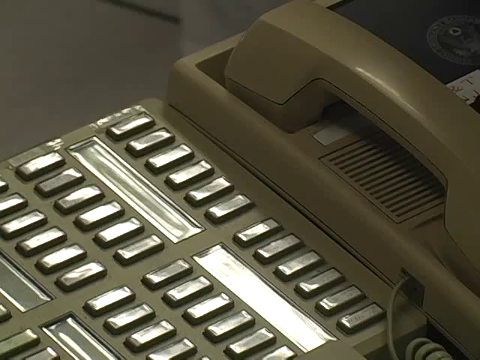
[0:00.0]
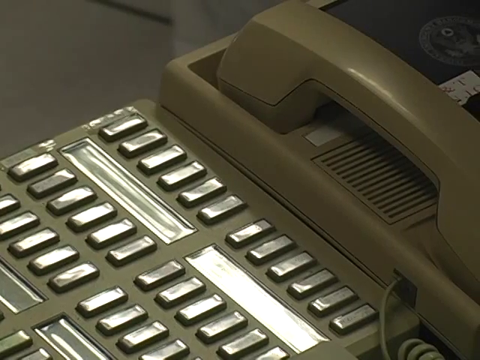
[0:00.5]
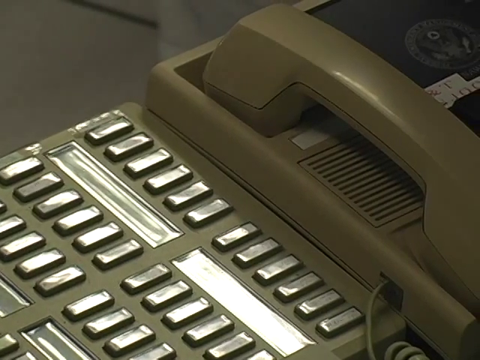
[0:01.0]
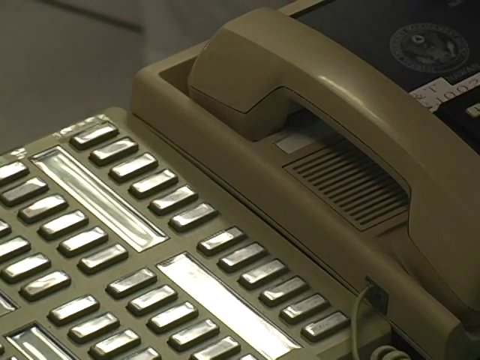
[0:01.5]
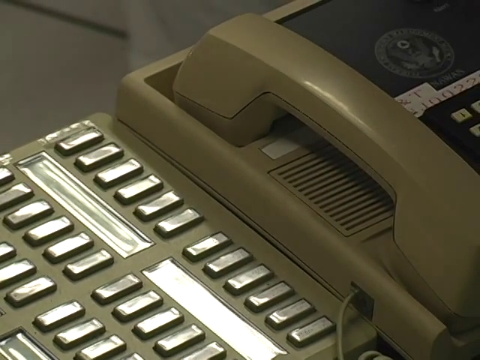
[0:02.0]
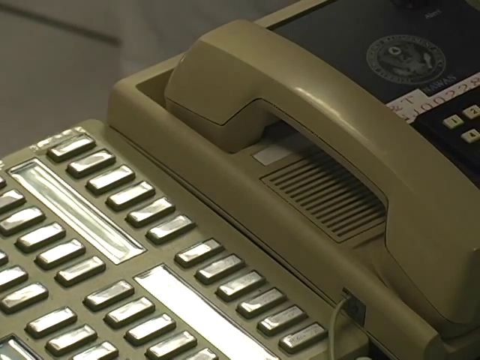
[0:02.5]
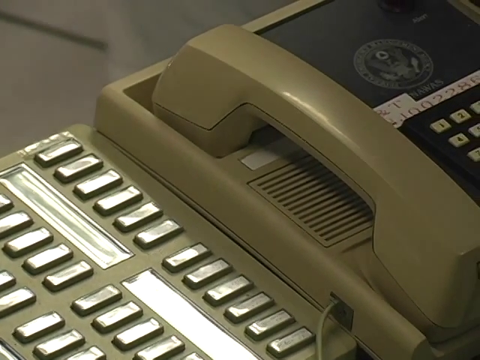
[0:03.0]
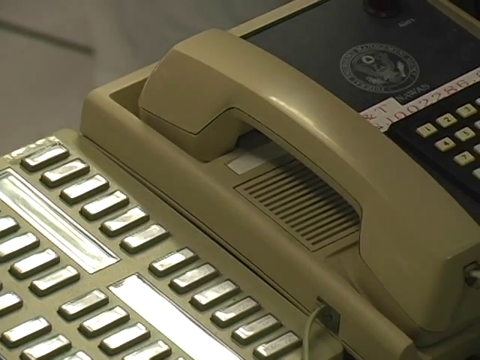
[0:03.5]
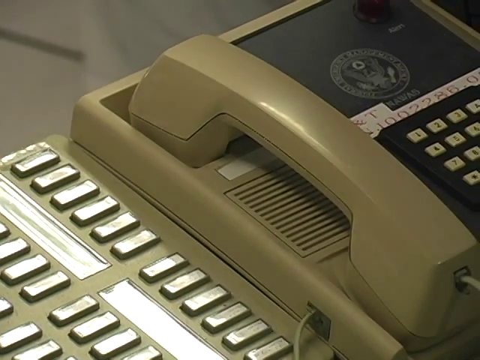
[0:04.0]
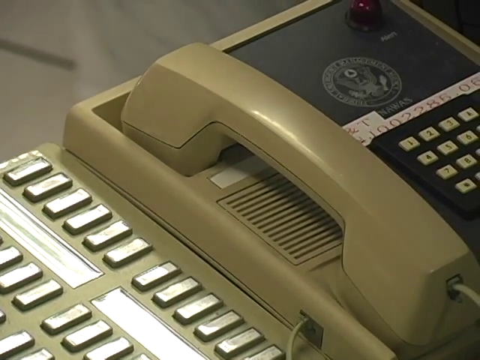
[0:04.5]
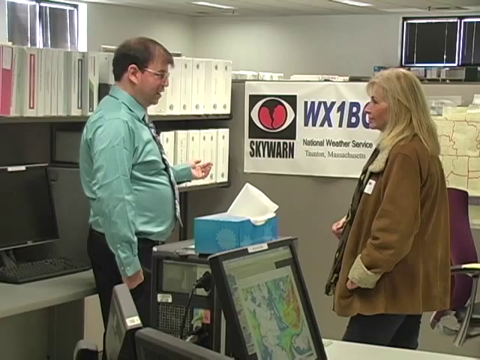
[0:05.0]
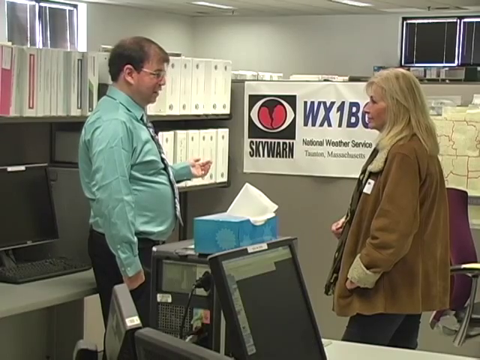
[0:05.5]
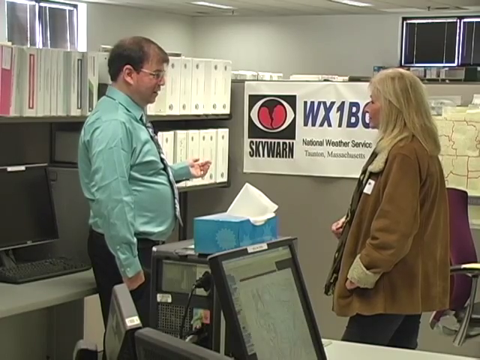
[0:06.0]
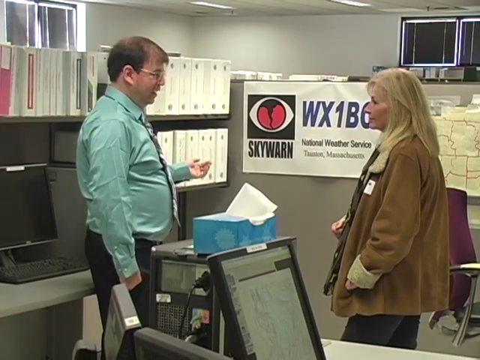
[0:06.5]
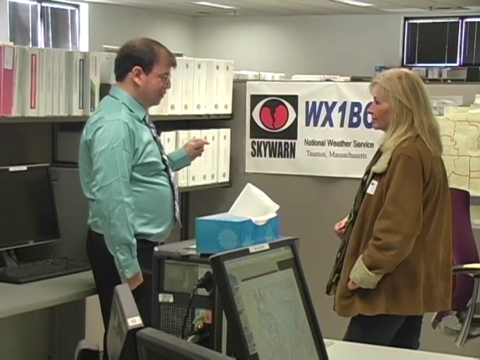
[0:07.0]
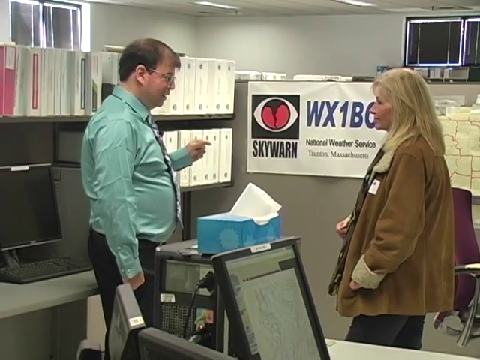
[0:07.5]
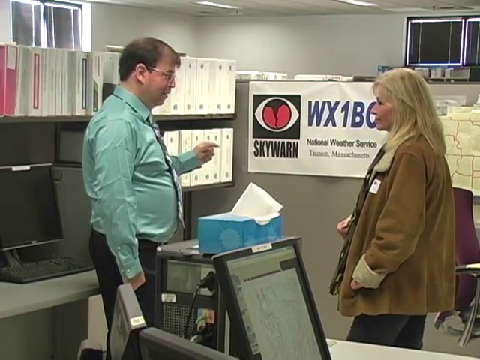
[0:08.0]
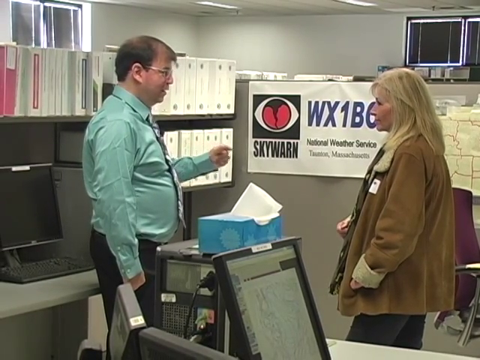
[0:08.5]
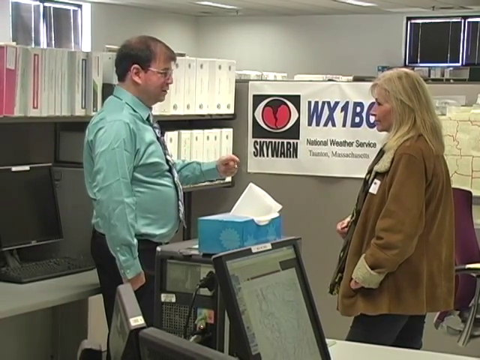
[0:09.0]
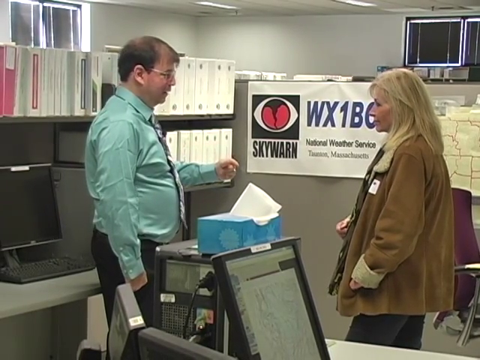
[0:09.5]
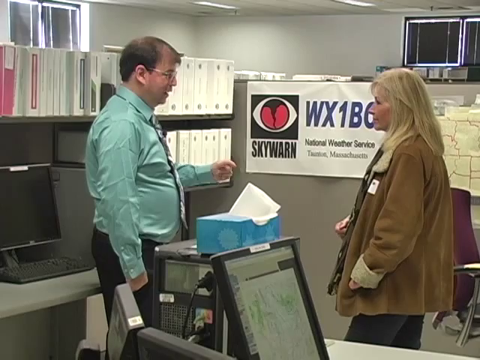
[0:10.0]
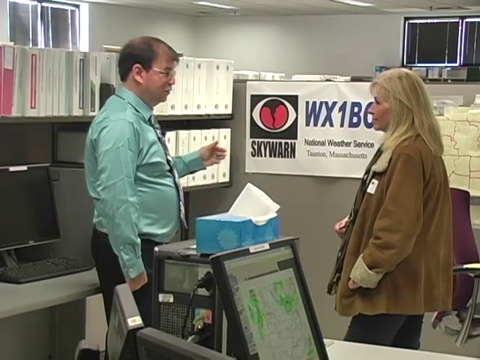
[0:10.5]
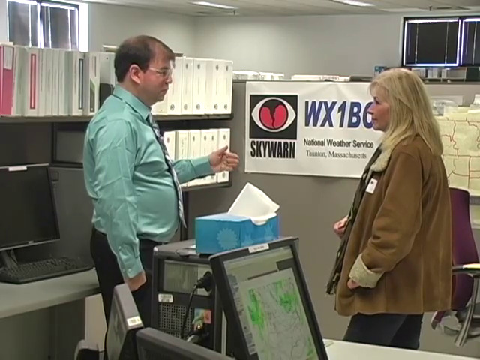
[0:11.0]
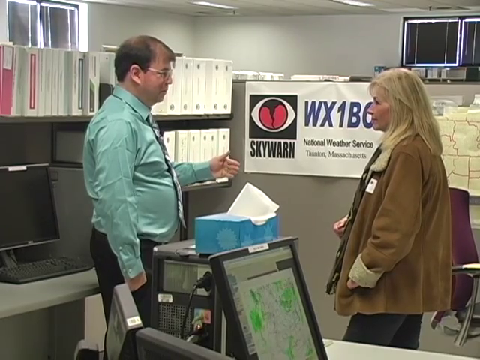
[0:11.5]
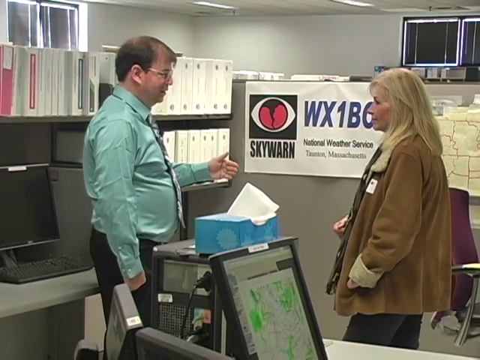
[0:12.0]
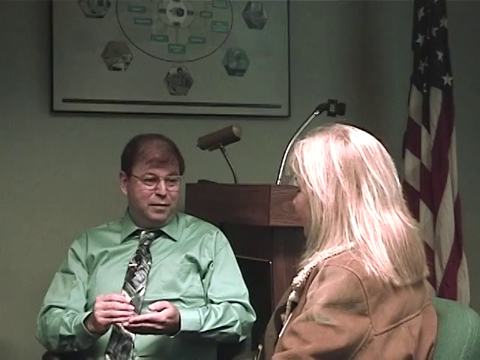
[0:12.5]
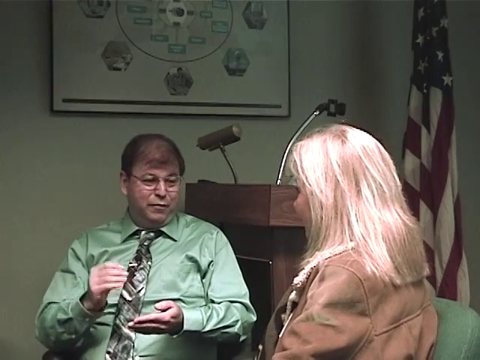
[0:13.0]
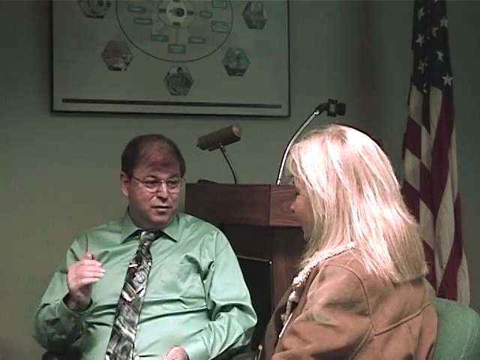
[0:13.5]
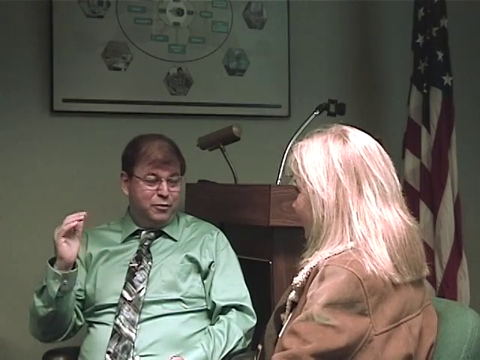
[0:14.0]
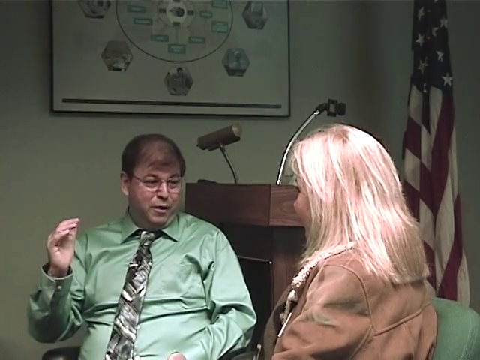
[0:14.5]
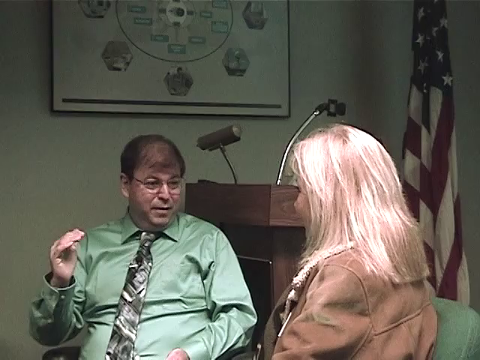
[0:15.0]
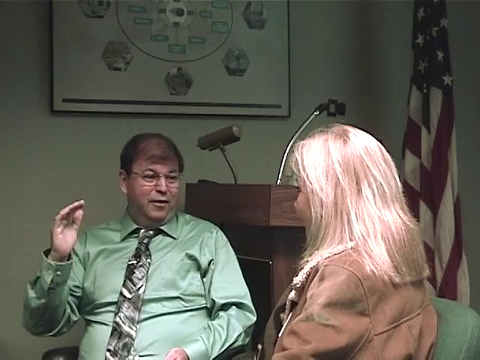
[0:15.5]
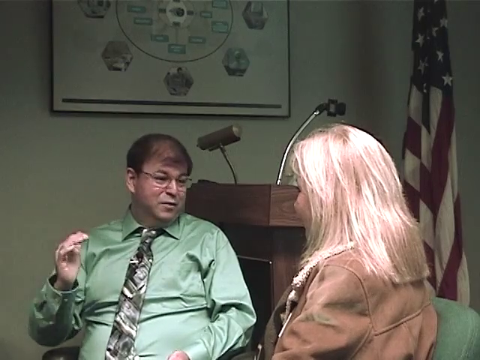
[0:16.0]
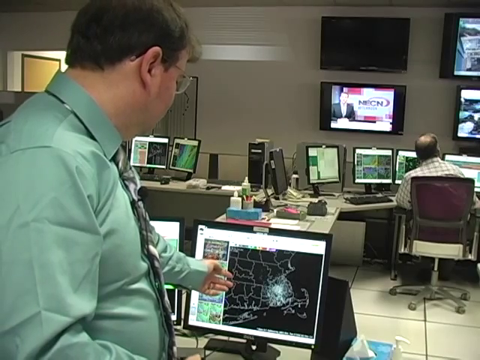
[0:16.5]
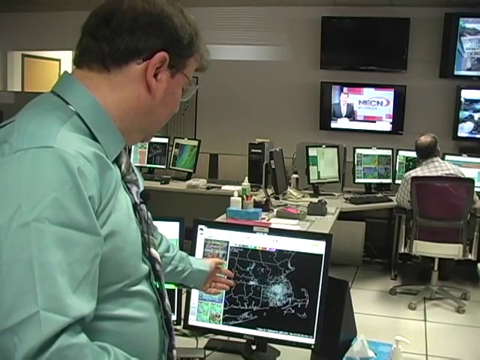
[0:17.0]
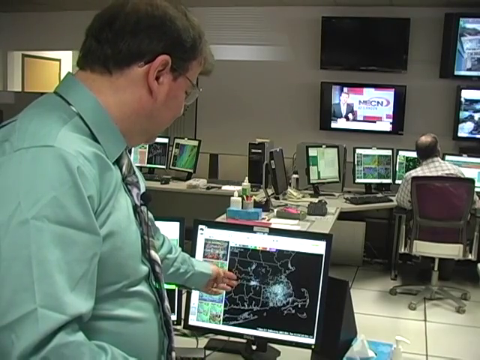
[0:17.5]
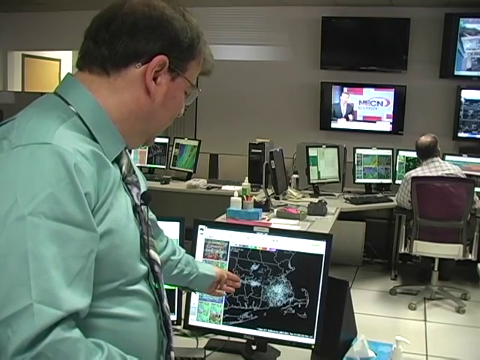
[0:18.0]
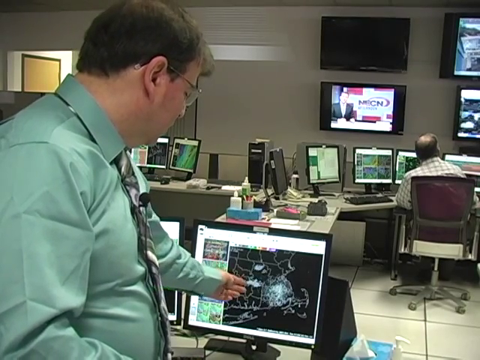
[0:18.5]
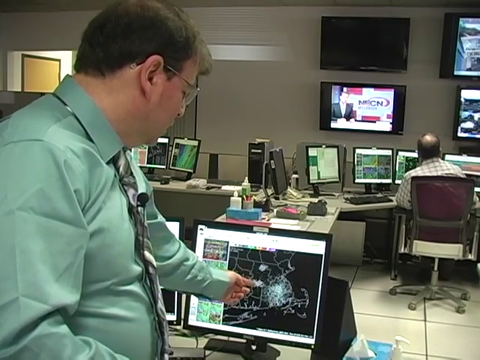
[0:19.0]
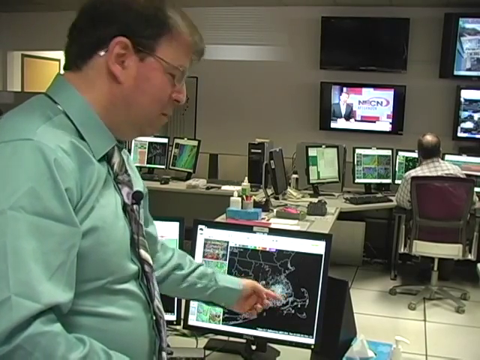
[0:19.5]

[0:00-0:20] A green telephone appears with some number on it. The scene switches to a man and a woman communicating in what looks like a workspace, with the man pointing at something with his arms. The video switches back, then again to the two of them communicating in what seems to be an office. Next, a man is in front of another man, with a guy behind him watching some TV. The workspace has computers around, and a man is sitting on a chair while the other man is standing. The man in the green shirt talks while pointing at a screen showing a map, which seems to be a weather map.